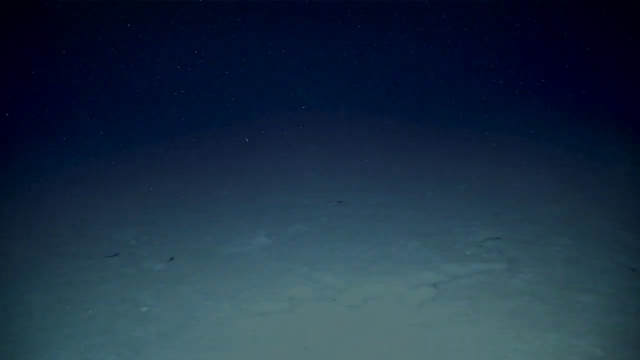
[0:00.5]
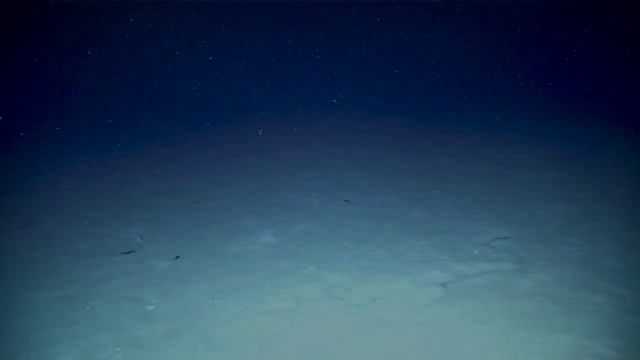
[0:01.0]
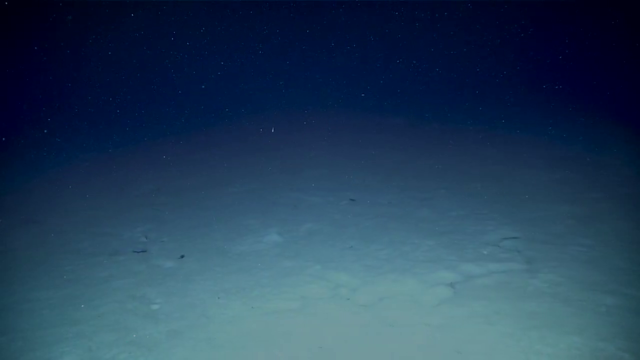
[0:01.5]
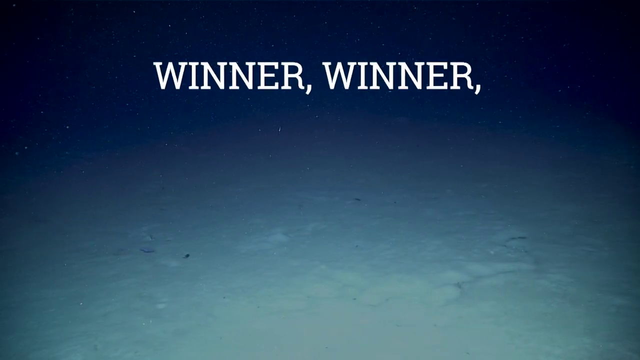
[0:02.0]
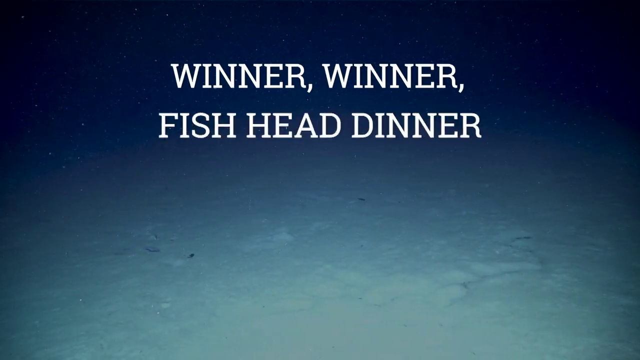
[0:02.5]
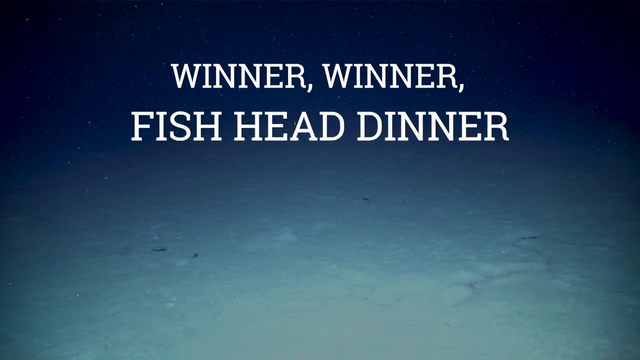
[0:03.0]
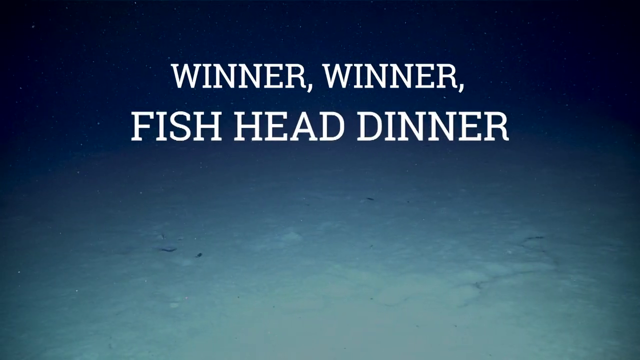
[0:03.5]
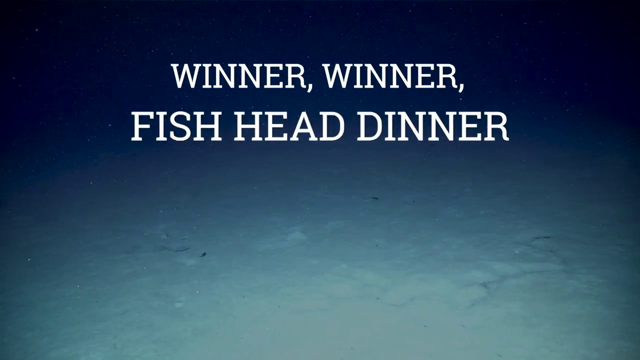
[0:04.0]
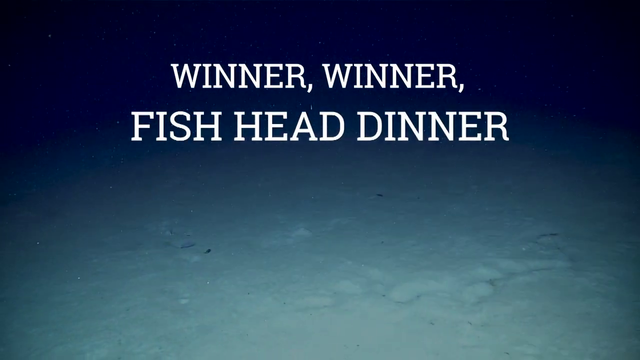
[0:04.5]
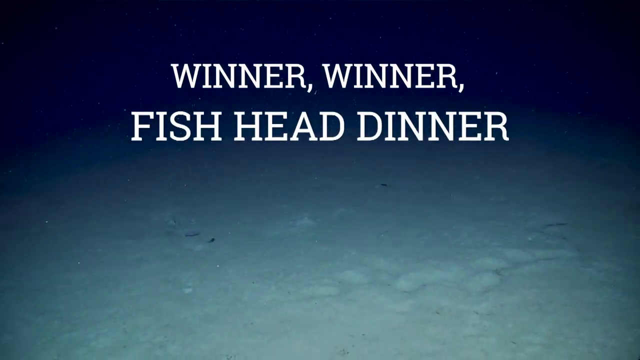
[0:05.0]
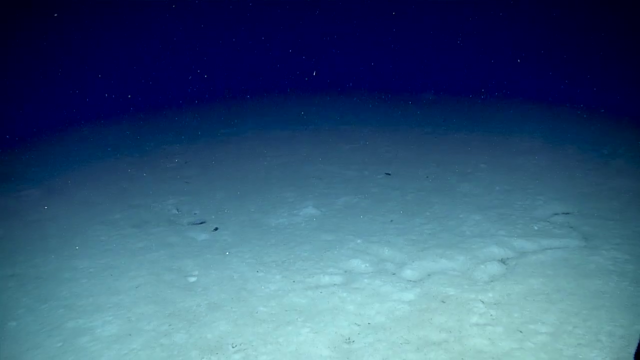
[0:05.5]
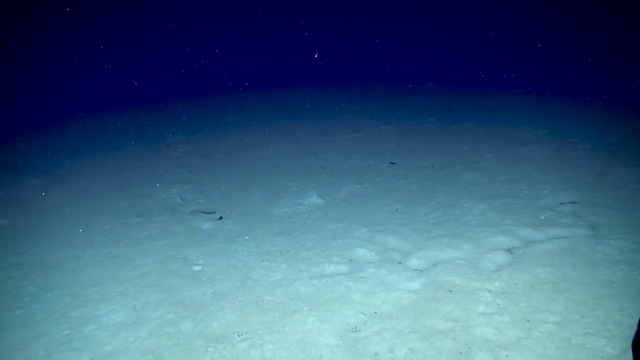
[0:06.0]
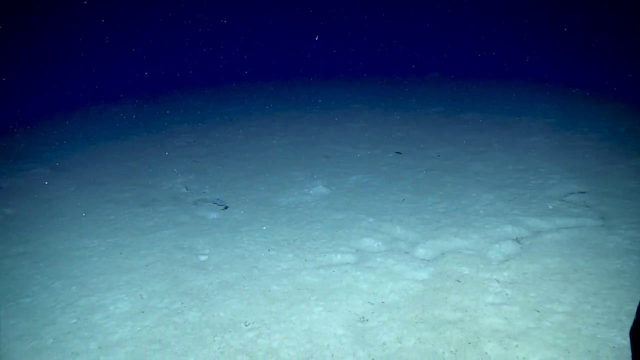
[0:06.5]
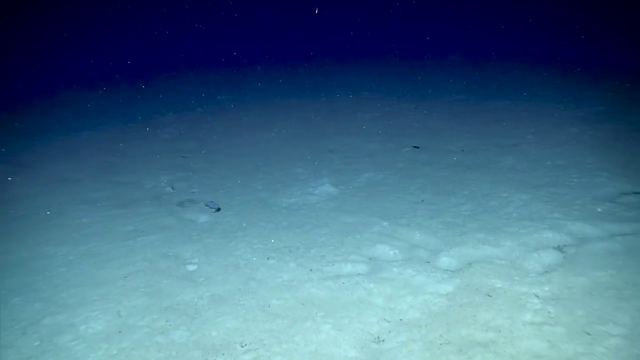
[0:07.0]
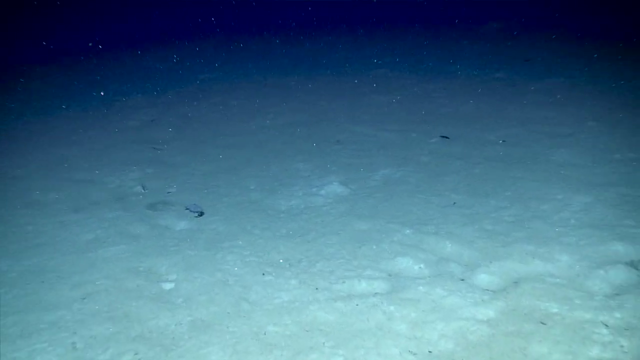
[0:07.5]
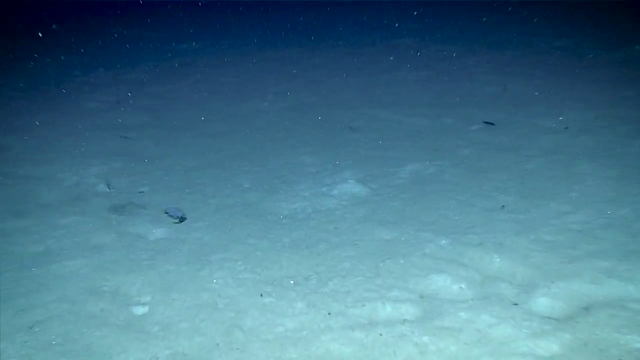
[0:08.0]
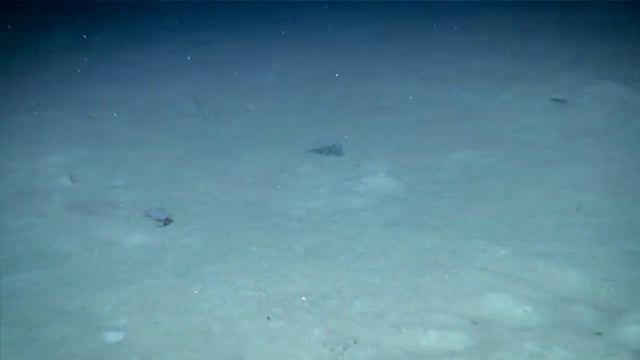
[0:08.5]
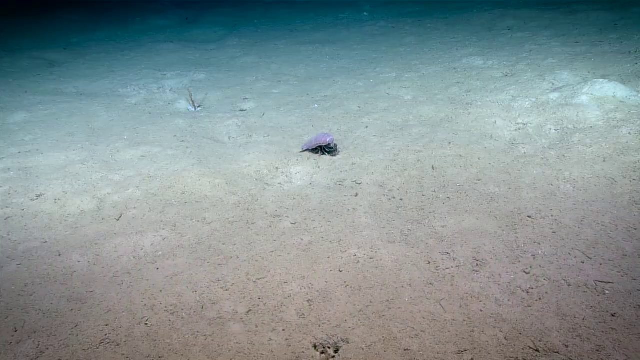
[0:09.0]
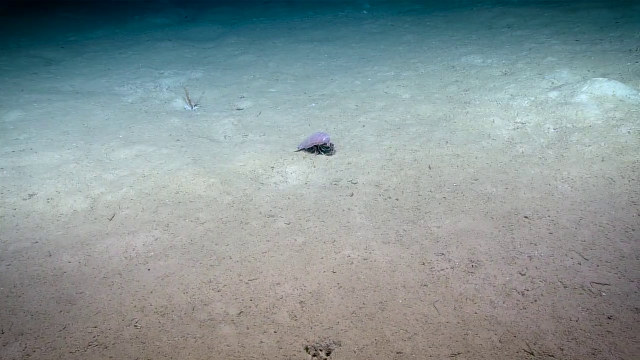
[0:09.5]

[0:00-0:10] The scene appears to be the bottom of the sea, with sand on the seafloor and darkness surrounding it. Text on the screen reads "WINNER WINNER FISH HEAD DINNER" and remains for a few seconds before disappearing. The camera seems to move closer to something in the background, where a small black spot is visible in the distance on the sand, possibly an organism.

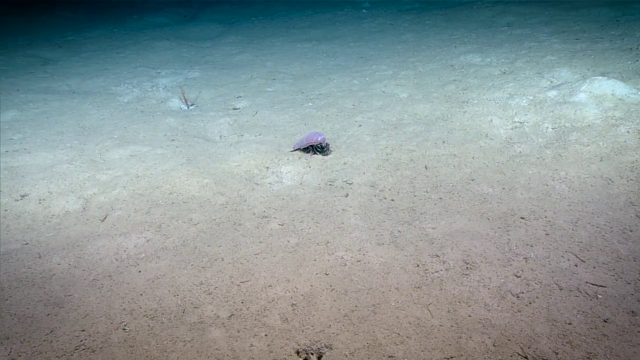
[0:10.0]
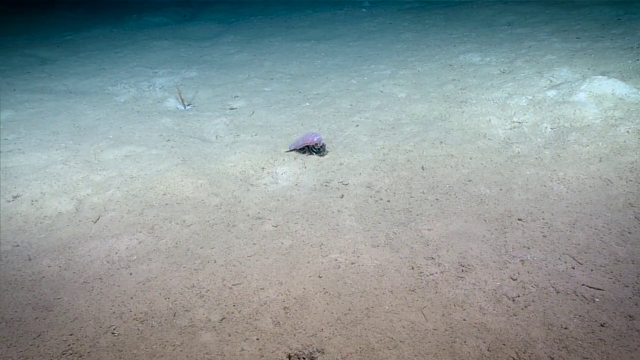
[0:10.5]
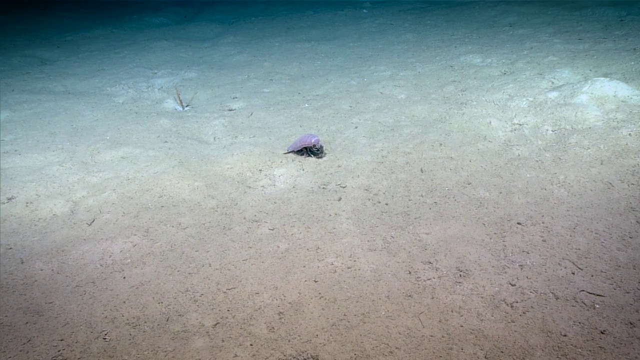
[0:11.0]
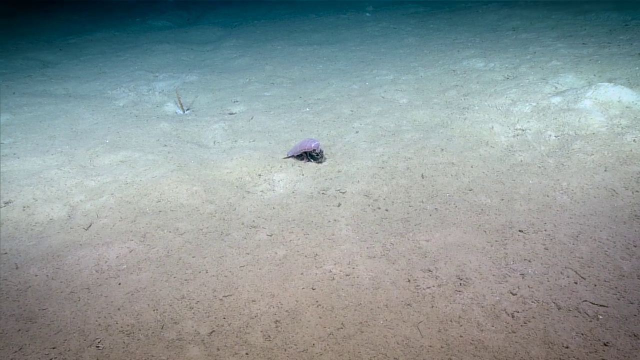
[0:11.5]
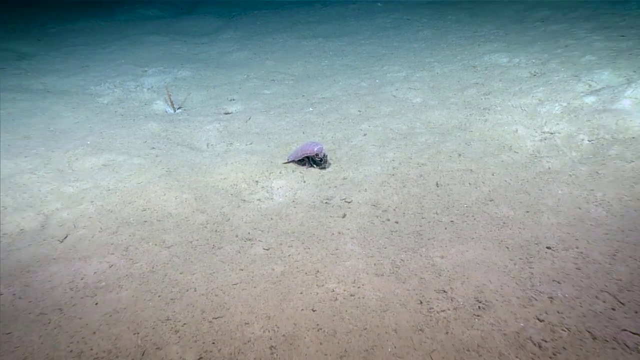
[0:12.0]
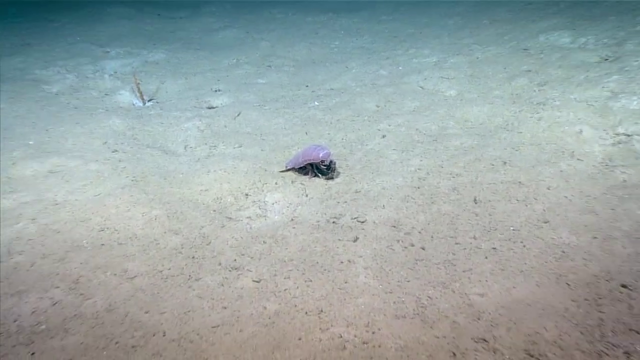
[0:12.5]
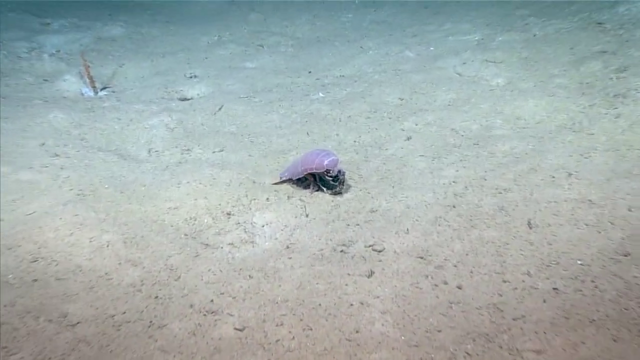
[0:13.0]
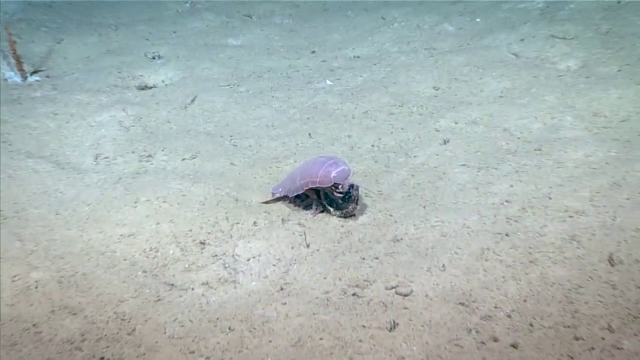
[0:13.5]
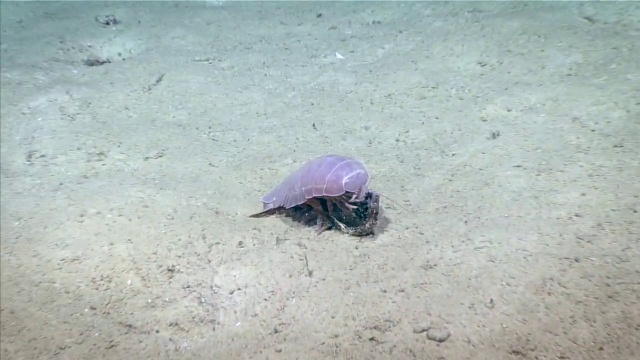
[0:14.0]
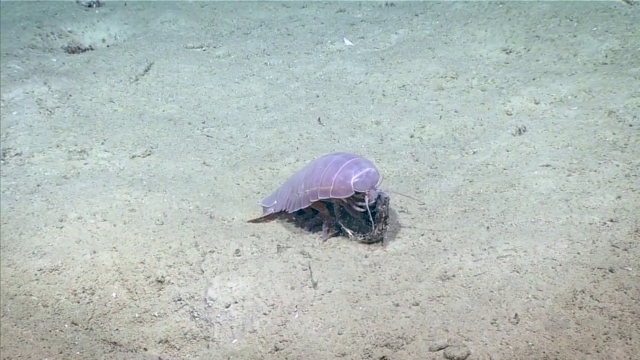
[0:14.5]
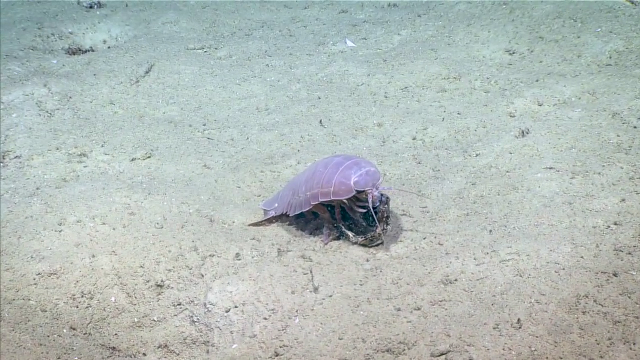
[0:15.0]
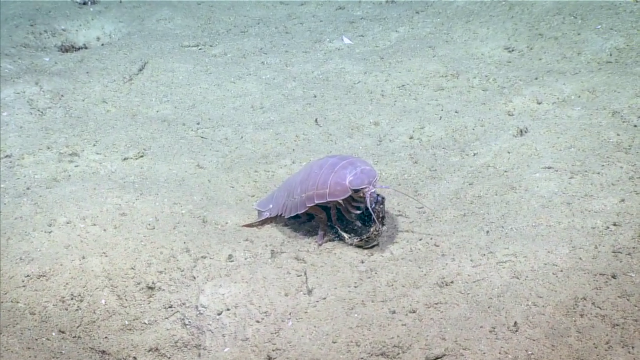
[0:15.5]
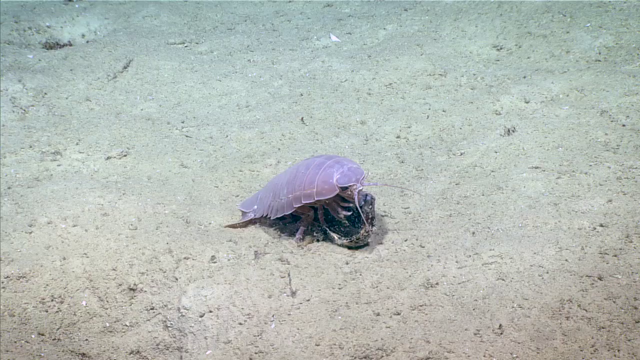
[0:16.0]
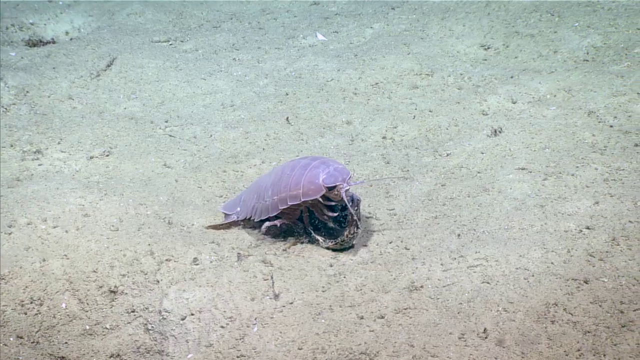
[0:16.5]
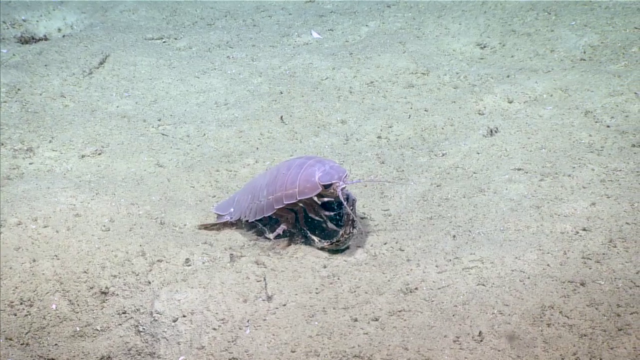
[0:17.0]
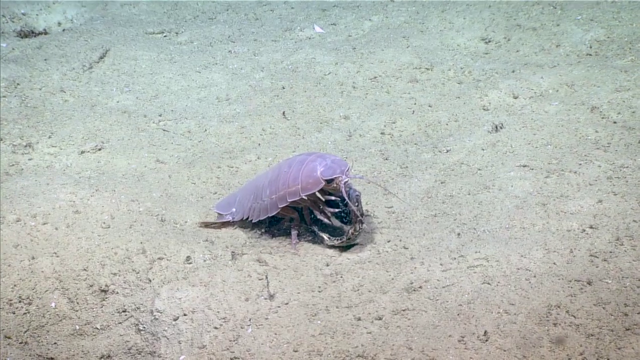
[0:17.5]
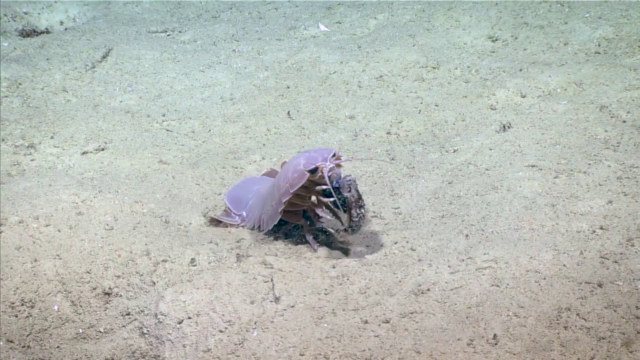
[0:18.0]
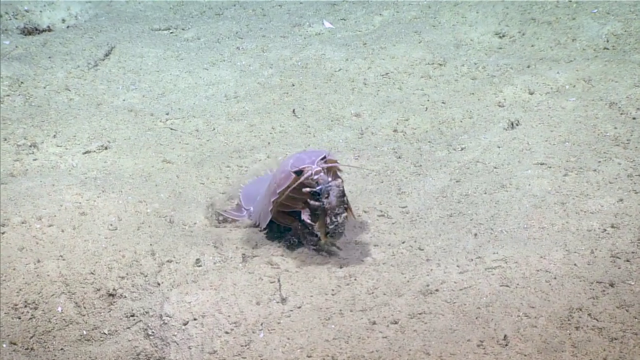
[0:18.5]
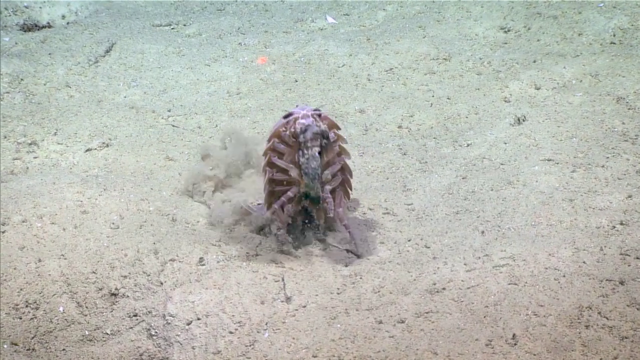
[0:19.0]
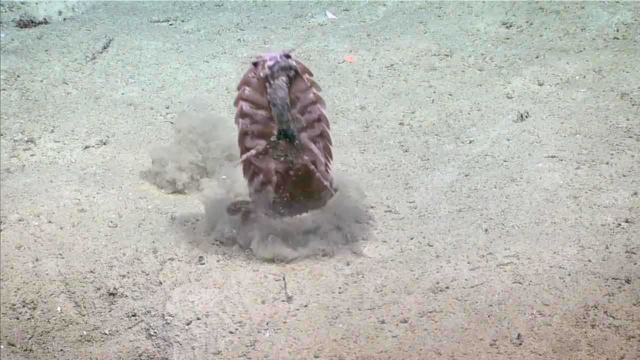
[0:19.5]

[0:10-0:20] The sandy sea bottom is still in view, and in the center is an organism, a small animal that looks like a crab. The camera gets closer to it. It appears to have gray armor and several arms. The creature begins to get up, showing the underside of its body, and begins to swim or float without difficulty using its legs. Underneath, it looks more or less like a crab or a cockroach.